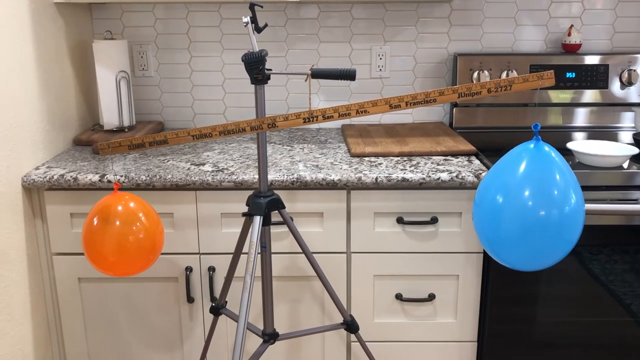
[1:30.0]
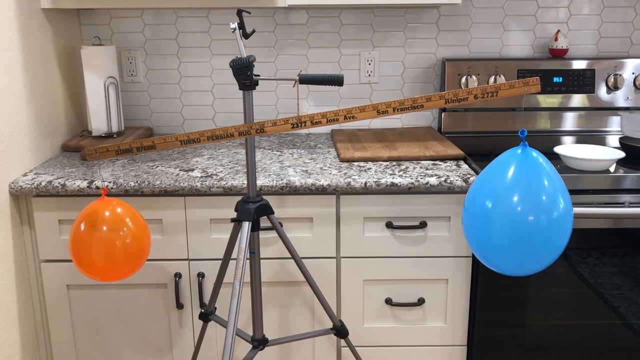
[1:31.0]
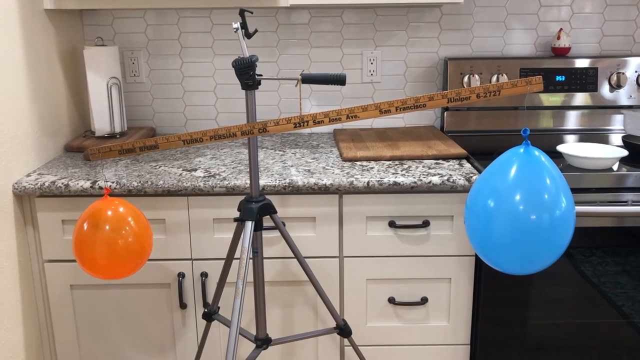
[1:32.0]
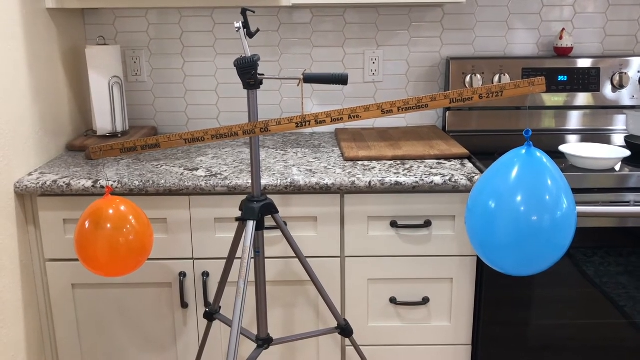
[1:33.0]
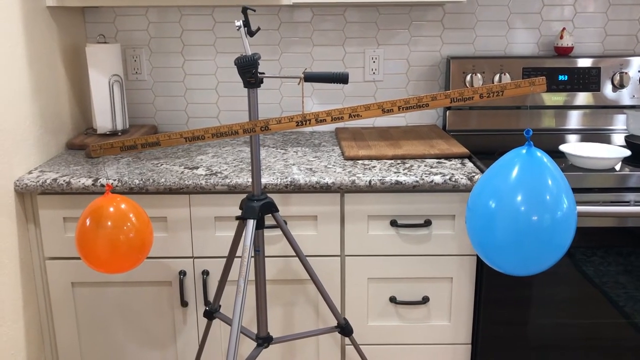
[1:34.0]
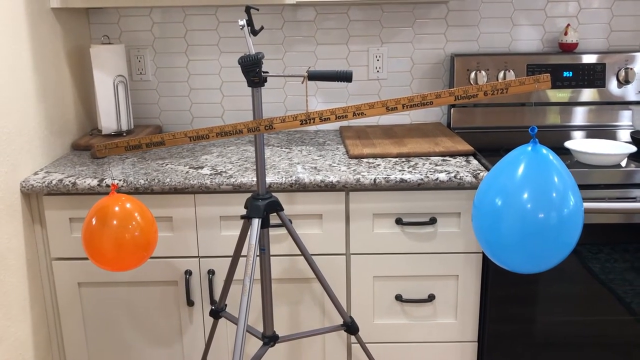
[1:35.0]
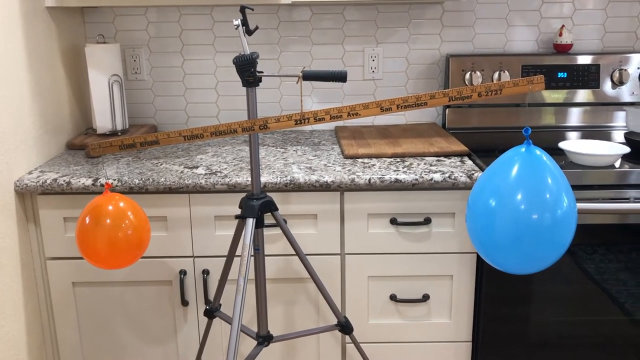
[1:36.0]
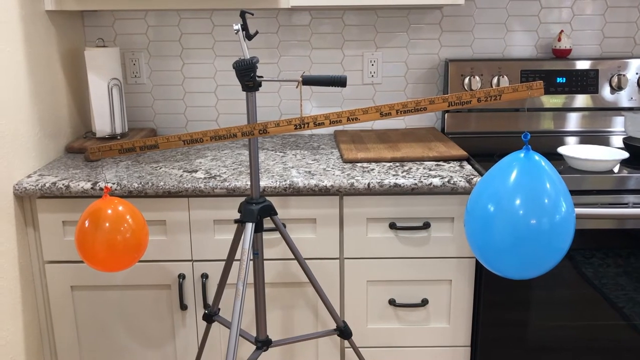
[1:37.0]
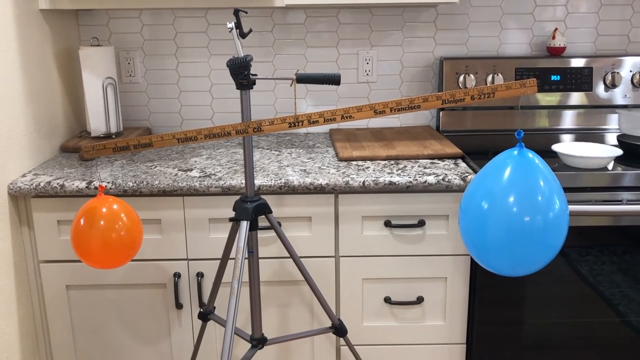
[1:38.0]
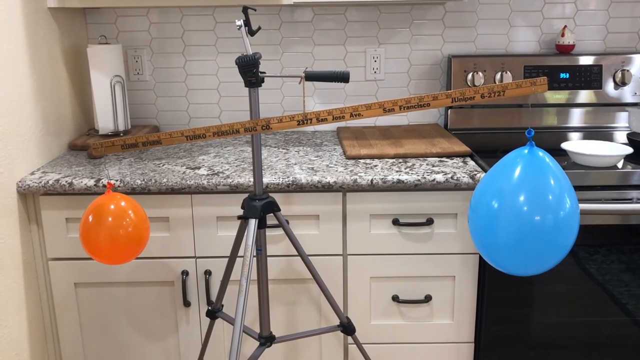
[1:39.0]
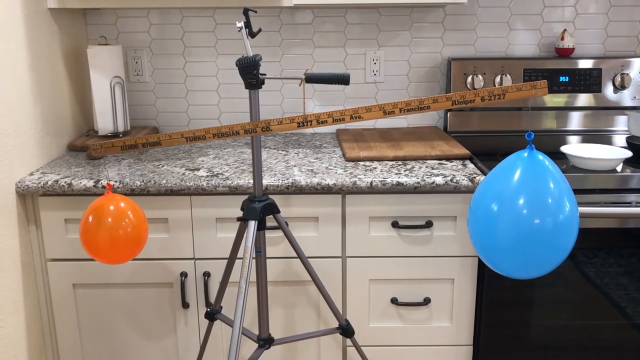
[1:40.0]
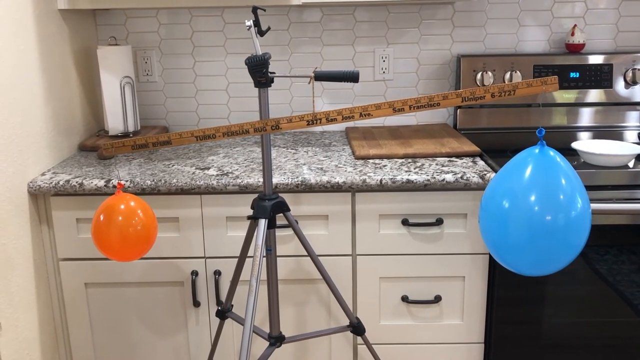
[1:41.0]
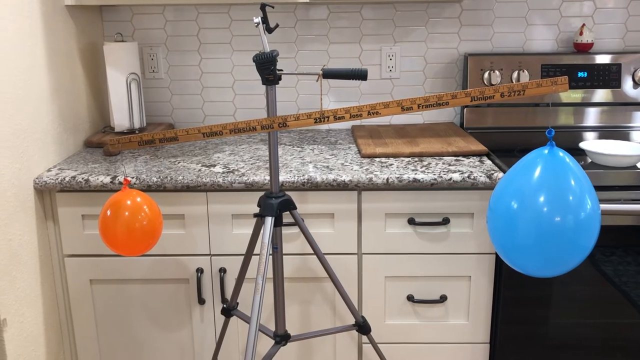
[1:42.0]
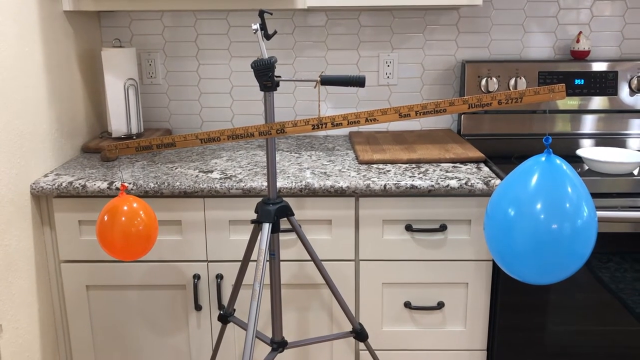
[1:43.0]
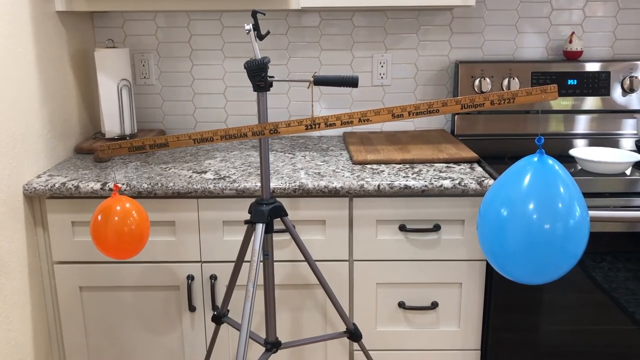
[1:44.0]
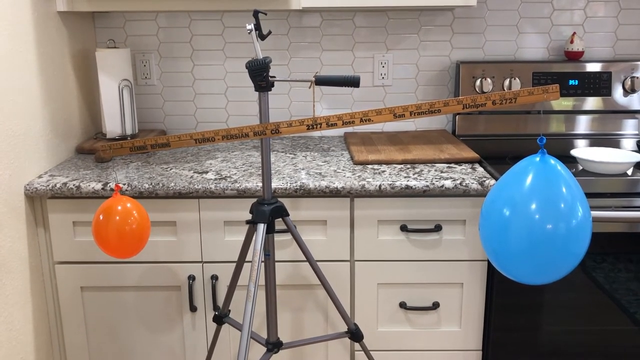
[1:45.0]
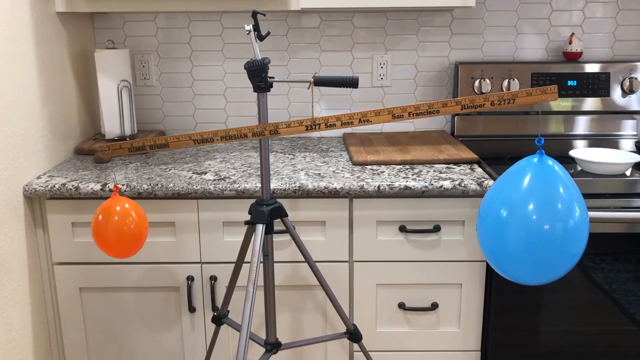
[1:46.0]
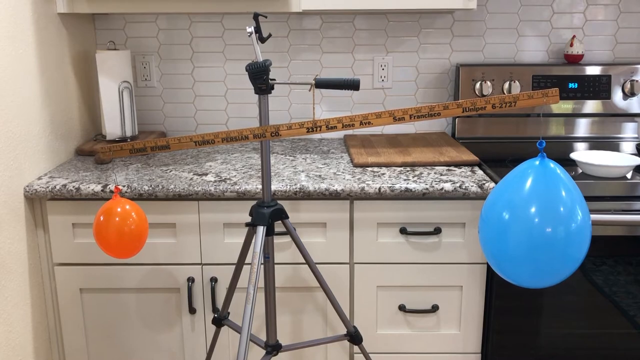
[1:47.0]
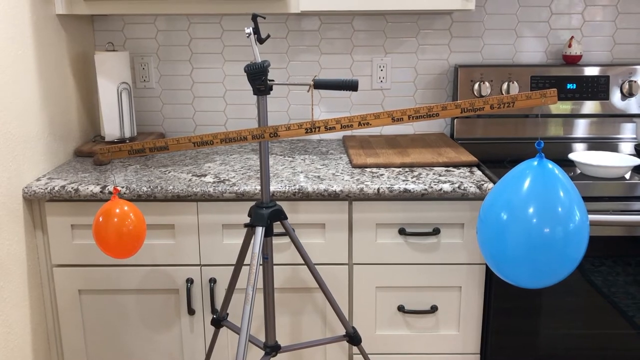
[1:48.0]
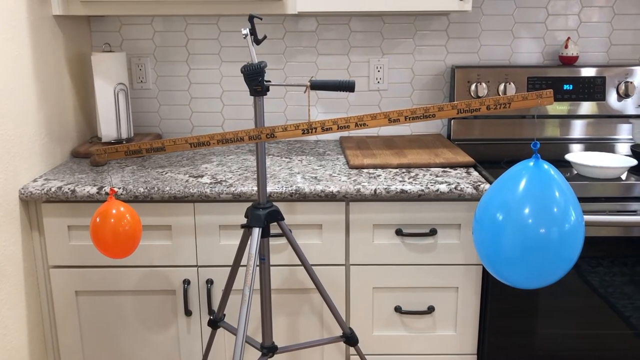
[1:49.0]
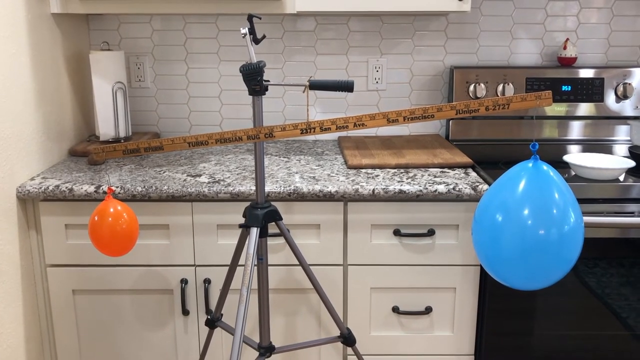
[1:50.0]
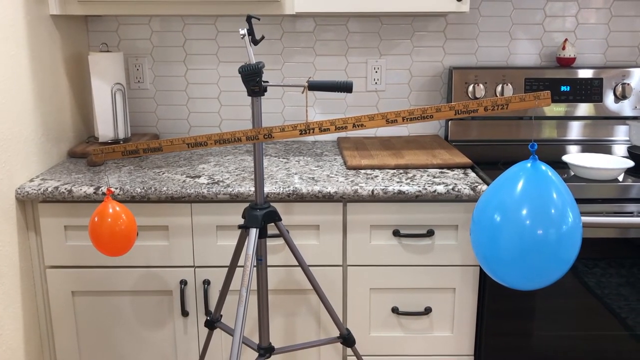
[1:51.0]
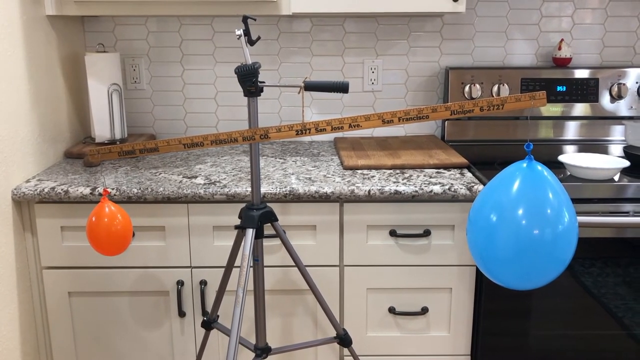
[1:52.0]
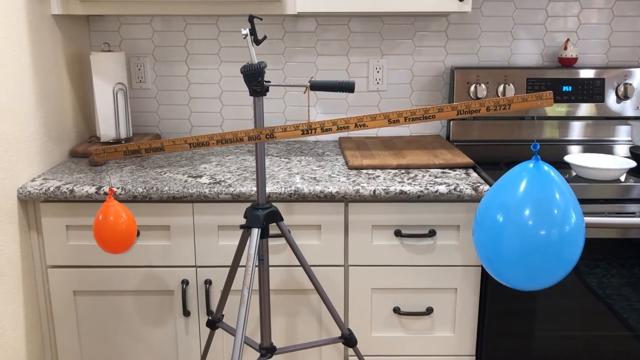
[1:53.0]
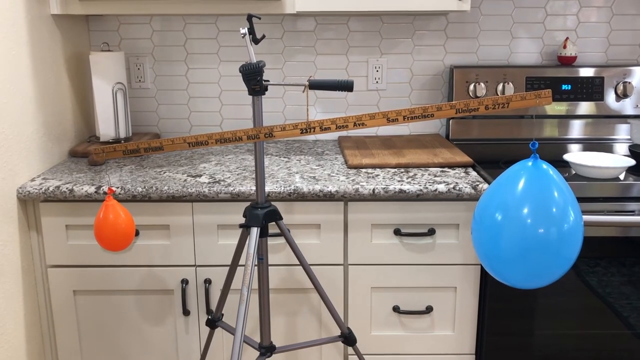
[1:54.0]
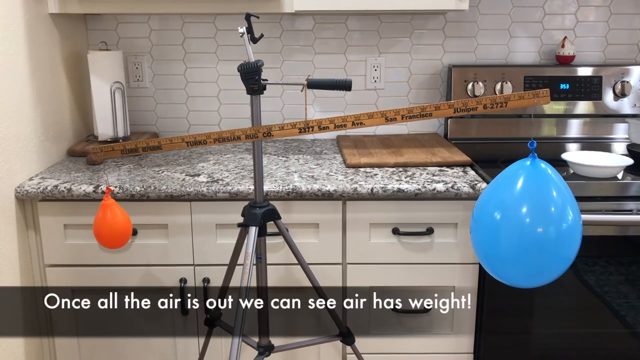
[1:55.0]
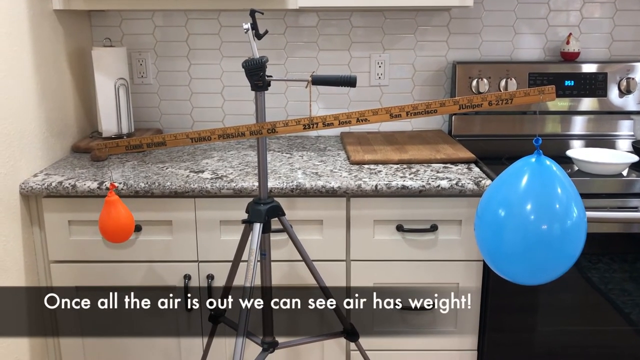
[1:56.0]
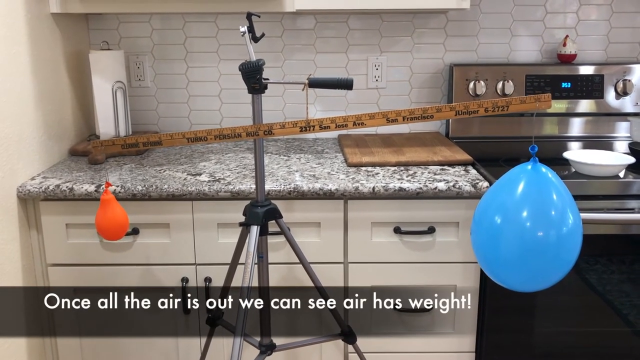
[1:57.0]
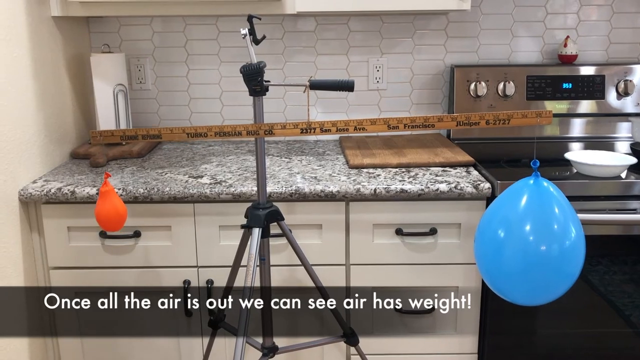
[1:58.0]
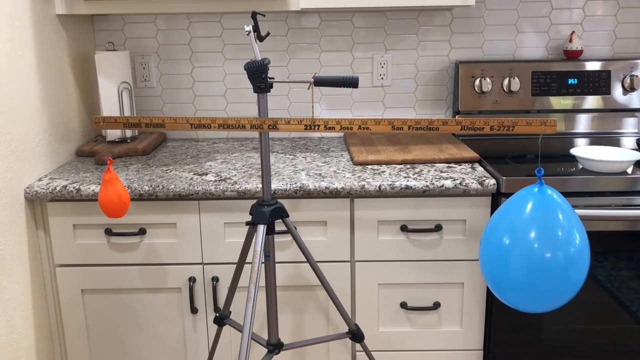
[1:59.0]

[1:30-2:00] At the left of the background is a little white wall, and from about two inches in from the left all the way across is marble in kind of oblong rectangles. A white cabinet goes across the top about two-thirds of the way, and a marble counter goes across two-thirds of the way. In the back left corner of the counter against the wall, there is a paper towel holder to the right of it, which is a plug-in. On the right side of the counter is a cutting board with a plug-in above it. To the right is a stove with a red and white object on top above the clock and a white bowl sitting toward the edge of the stove on top; the oven handle is silver. Three white drawers with black handles are under the cabinet, with three white doors with black handles under those. The tripod comes up just left of center, branching down to the right, to the left and in front, with a black piece holding it together, more silver going up, and black plastic at the top with a handle going to the right. The ruler is balanced, a little lower on the left side than the right. The orange balloon on the left is shrinking as air is let out, while the blue balloon is on the right, and this does not cause the ruler to shift at all. Text scrolls across the bottom. Then the side with the blue balloon slowly starts to go down a little.